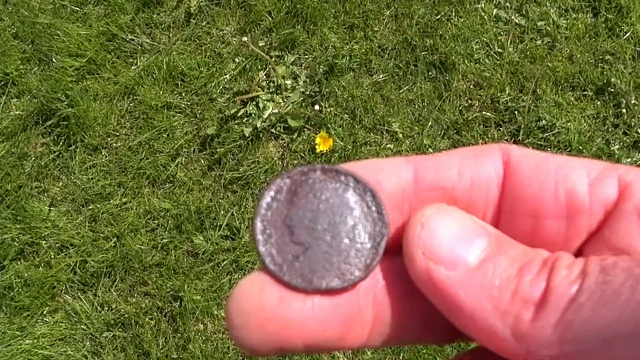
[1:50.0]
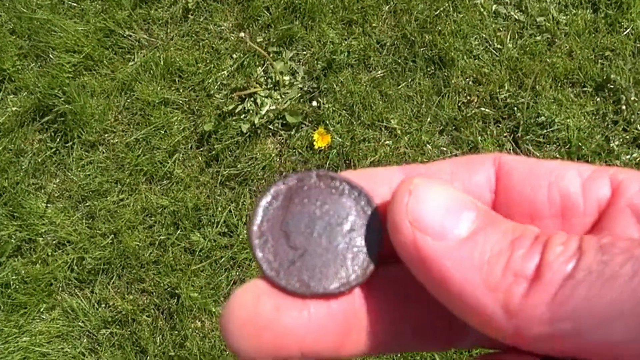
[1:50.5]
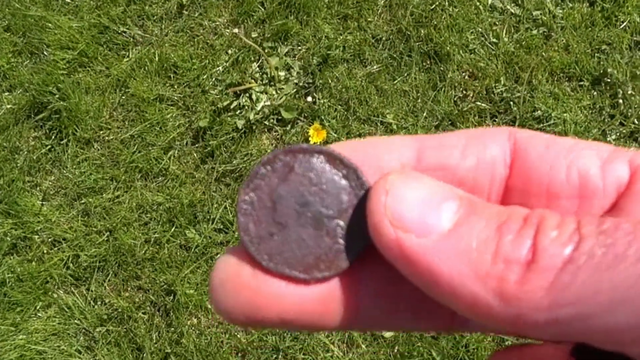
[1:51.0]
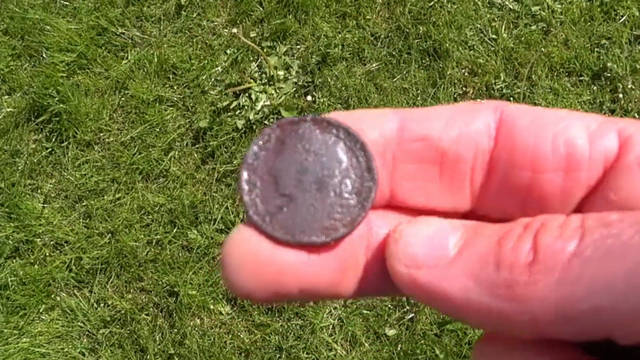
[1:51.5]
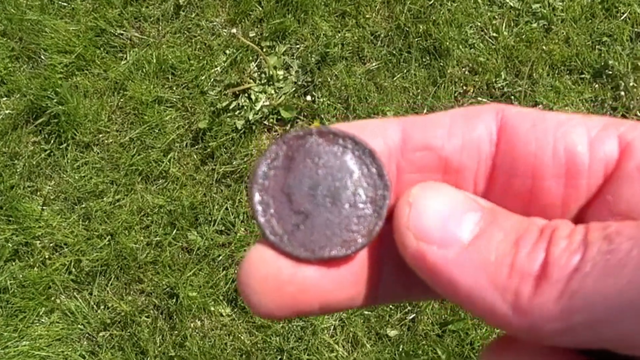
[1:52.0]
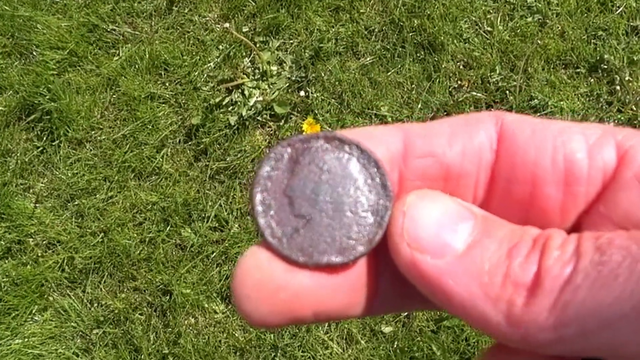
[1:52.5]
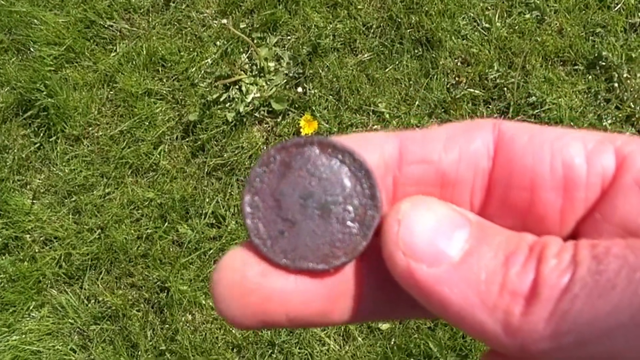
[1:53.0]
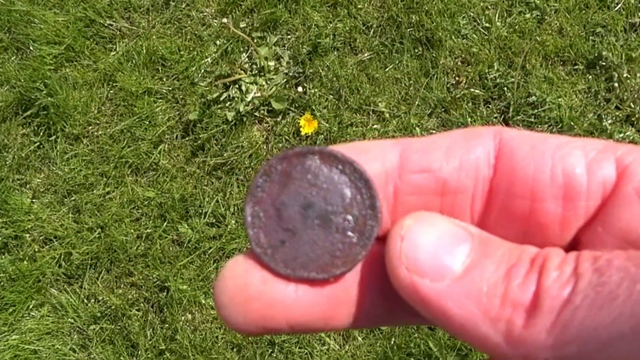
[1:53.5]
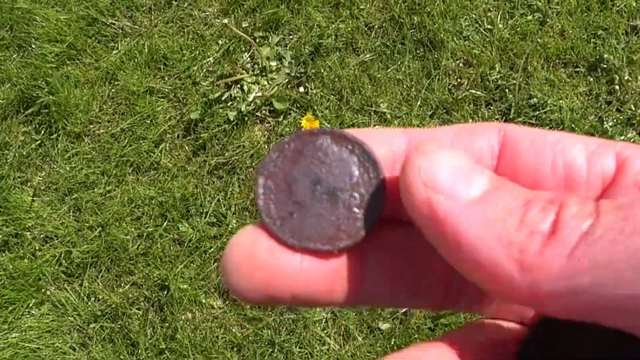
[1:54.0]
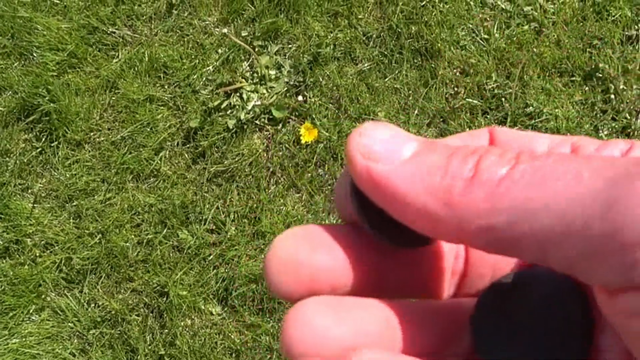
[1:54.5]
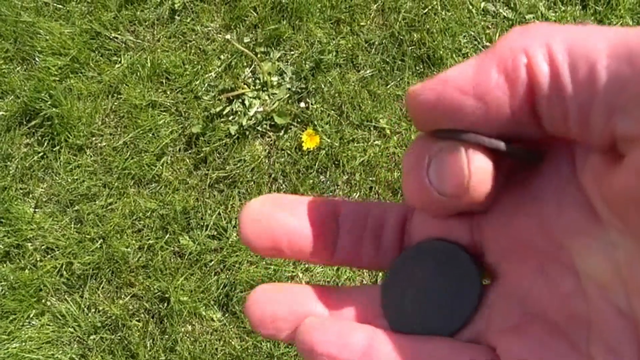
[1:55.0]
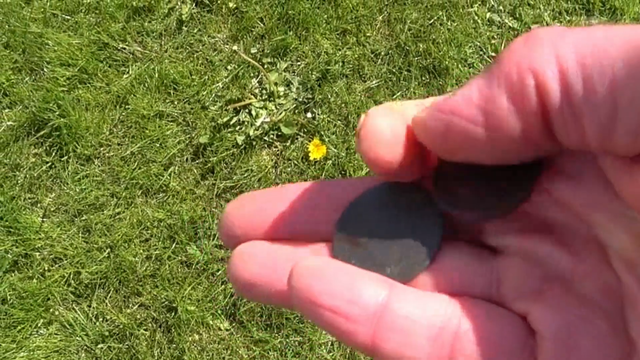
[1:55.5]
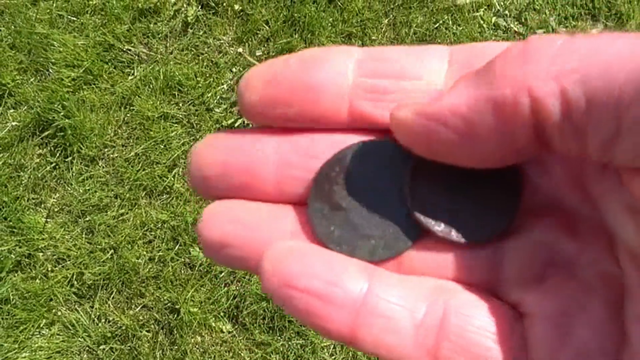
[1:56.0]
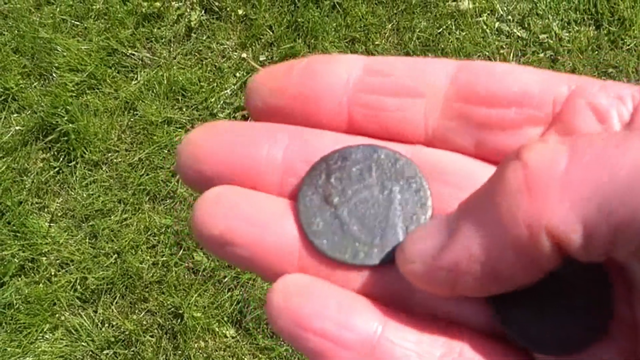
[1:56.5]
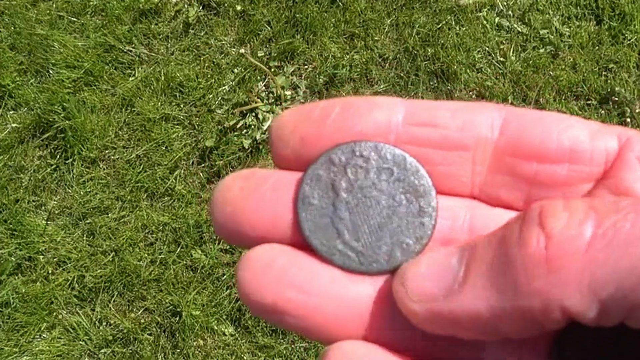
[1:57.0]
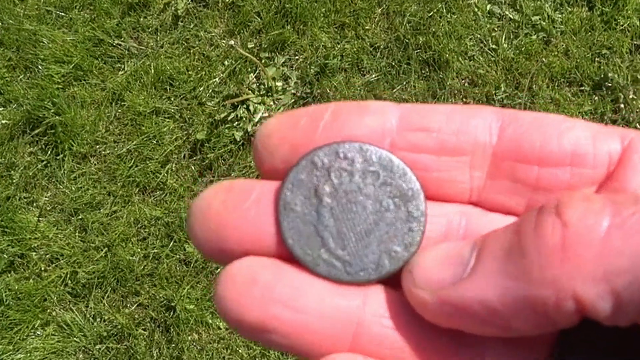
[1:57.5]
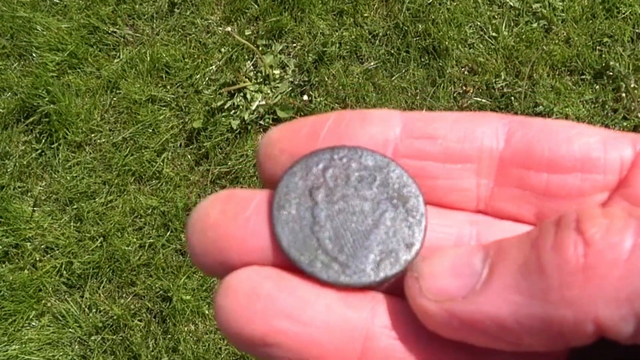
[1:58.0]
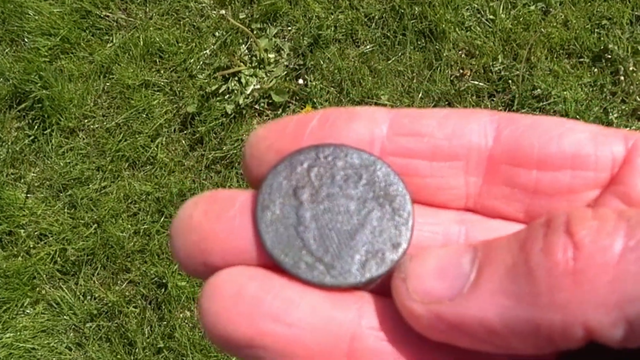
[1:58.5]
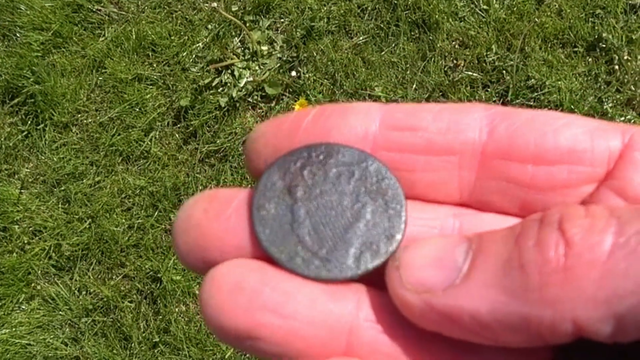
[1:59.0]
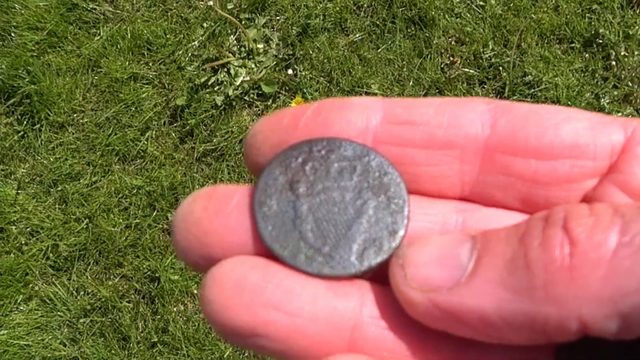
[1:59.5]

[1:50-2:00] Two fingers hold the coin in the foreground, then all three fingers are visible as he shuffles the first coin back to show a second one. This coin looks like it has a harp with a crown at the top, a bit like the Guinness logo. It is quite a big coin; the coins are nearly as wide as two of his adult fingers, maybe three centimetres across. He fumbles a little trying to flip the coins over. The dandelion is still visible in the background. The coins are still out of focus and the grass is in focus. The shot then stops suddenly.